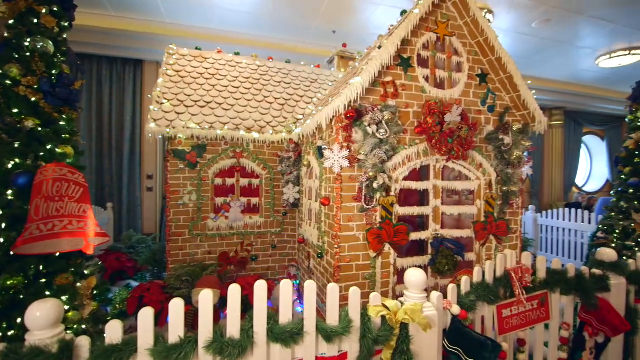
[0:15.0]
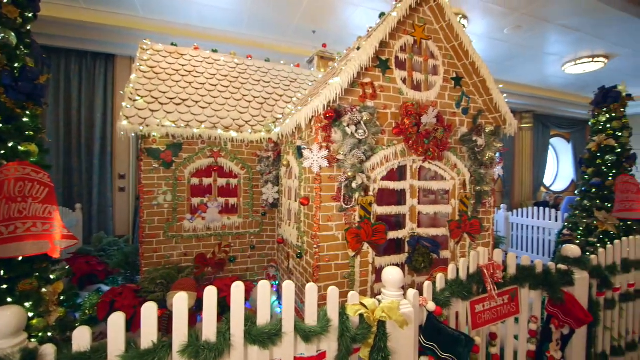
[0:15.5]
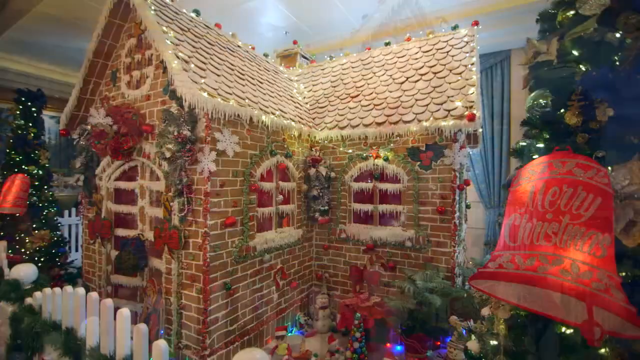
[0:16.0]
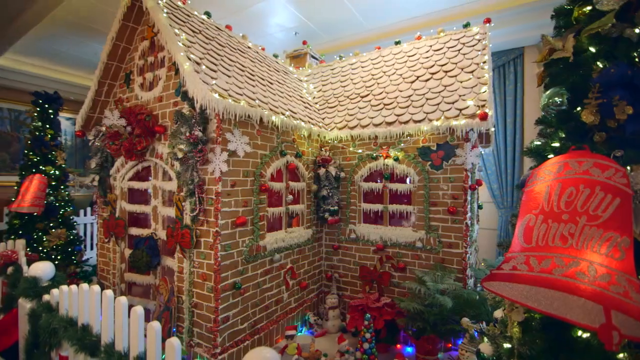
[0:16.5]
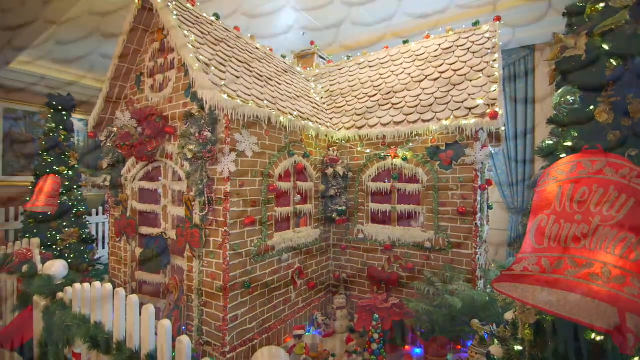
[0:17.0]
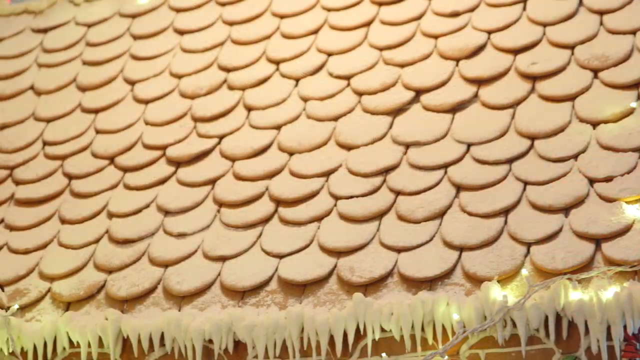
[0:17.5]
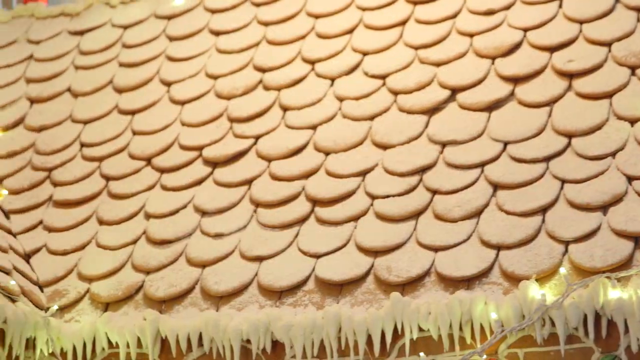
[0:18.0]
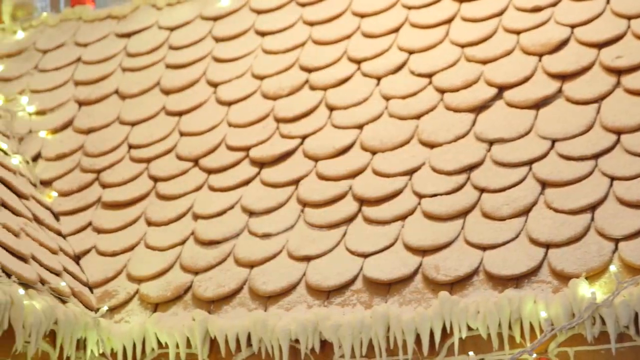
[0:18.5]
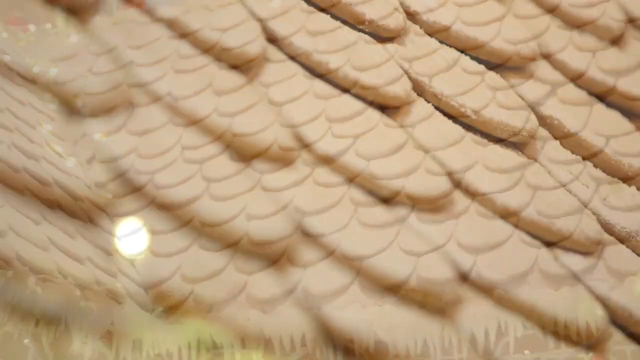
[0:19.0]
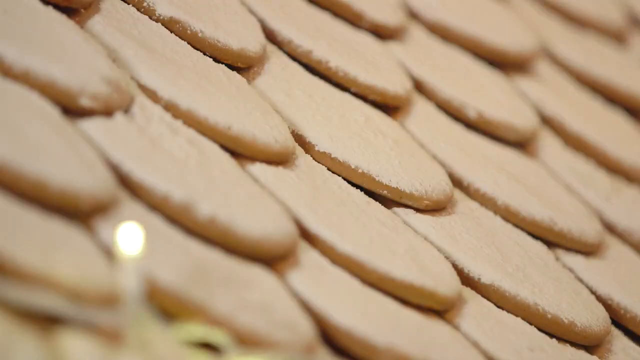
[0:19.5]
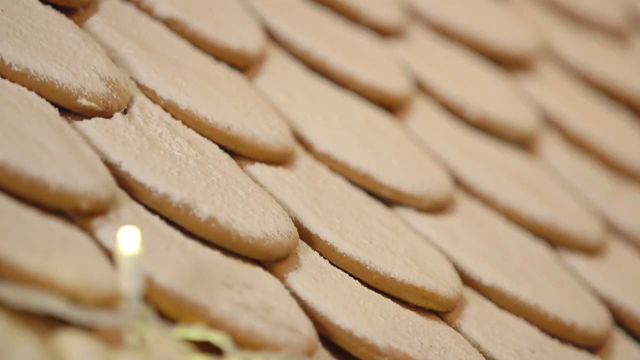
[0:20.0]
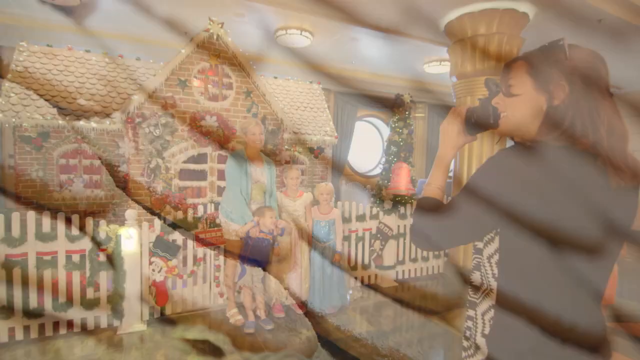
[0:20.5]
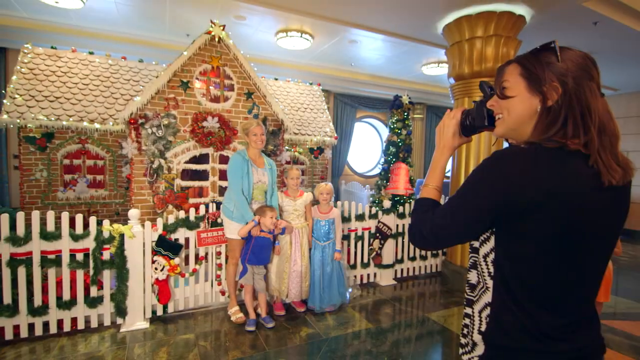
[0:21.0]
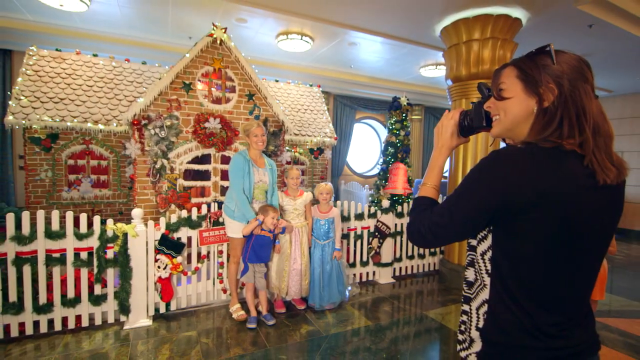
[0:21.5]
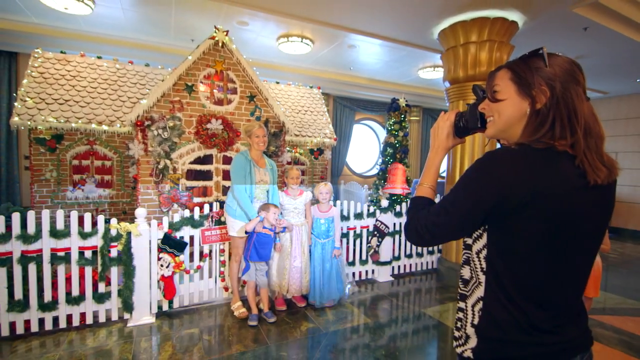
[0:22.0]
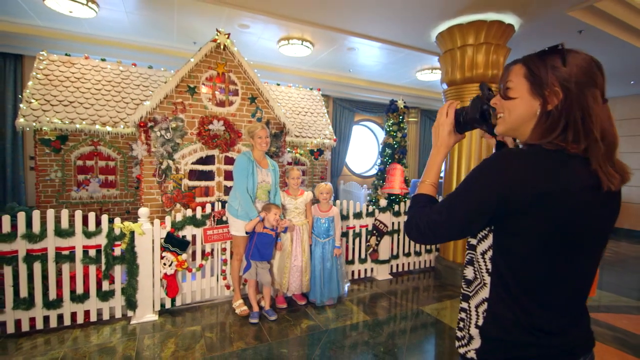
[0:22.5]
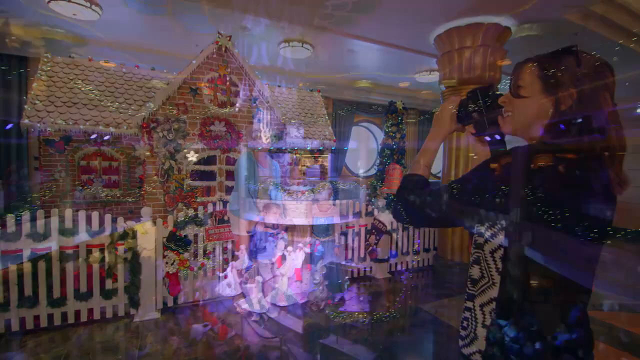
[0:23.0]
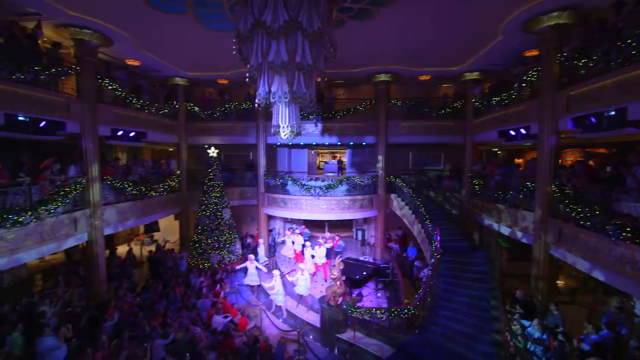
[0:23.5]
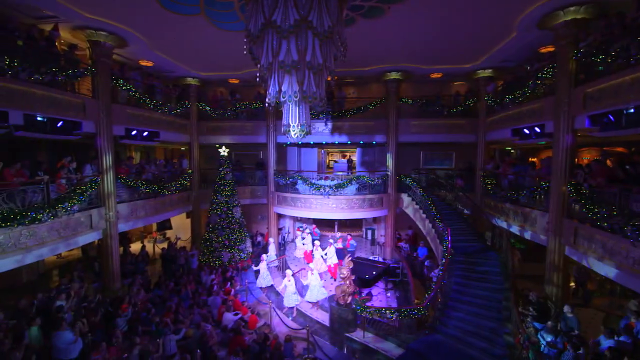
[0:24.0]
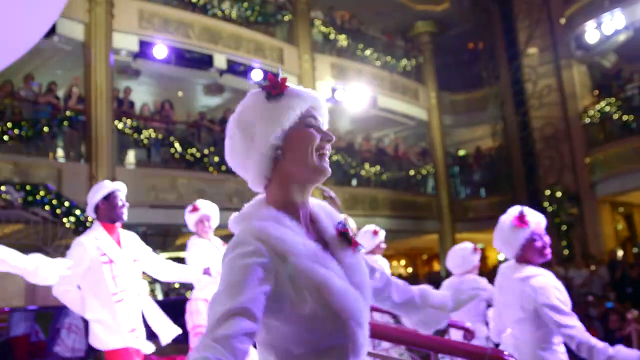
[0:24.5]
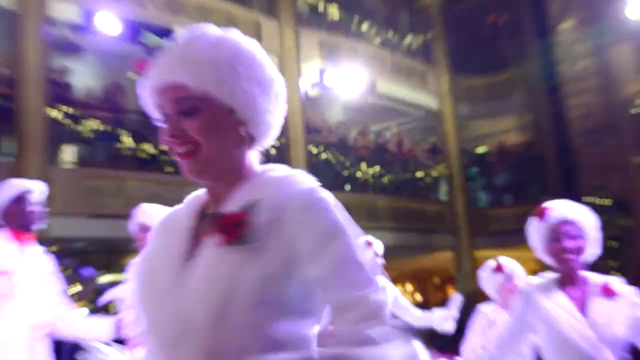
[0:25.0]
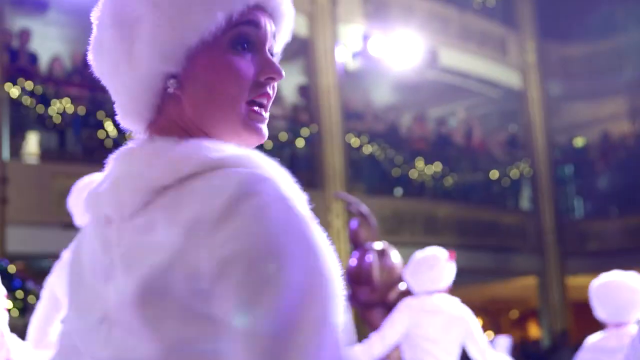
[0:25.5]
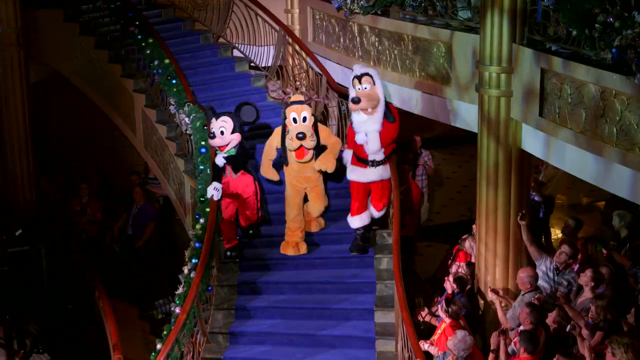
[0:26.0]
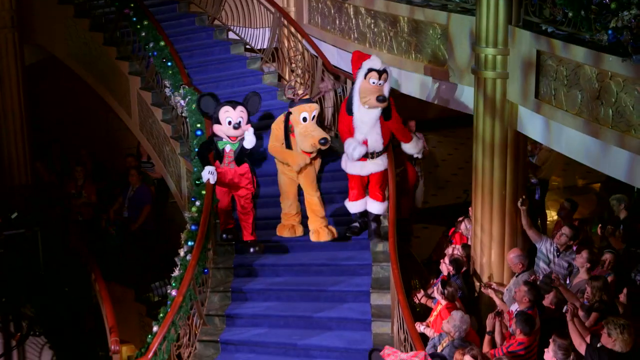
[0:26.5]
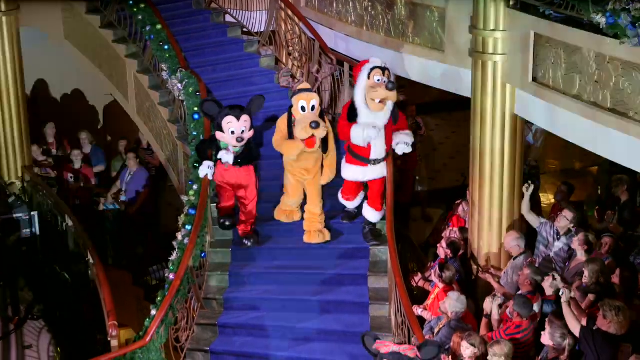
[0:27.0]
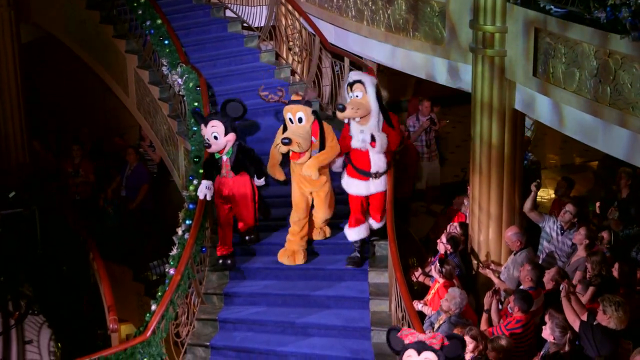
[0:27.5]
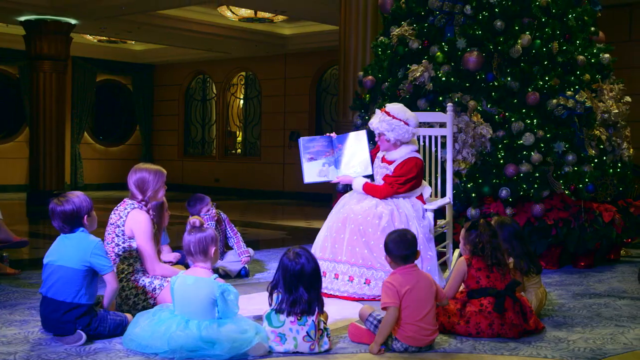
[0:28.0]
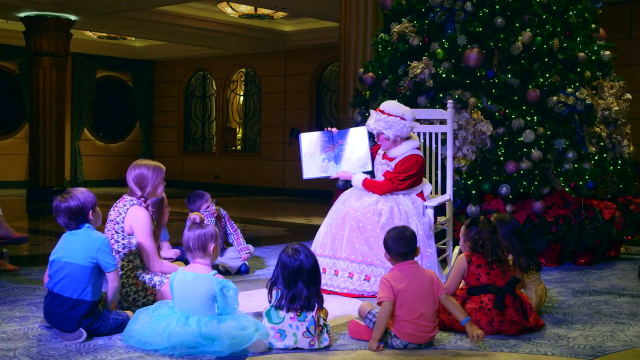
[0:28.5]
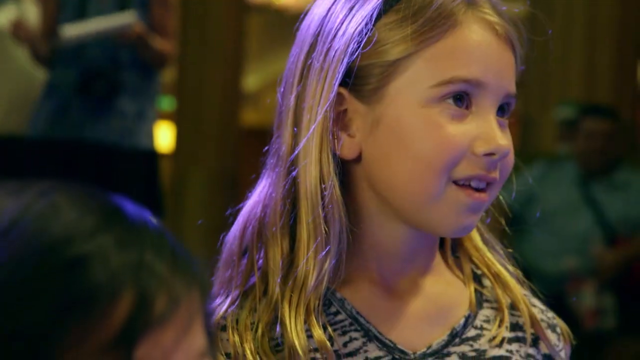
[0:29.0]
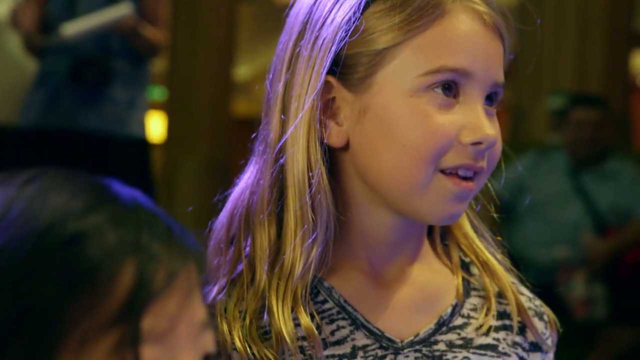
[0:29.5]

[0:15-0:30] The gingerbread house, taller than an average person, is shown in a close-up of its gingerbread shingles, which look individually placed, and then even closer. It appears to be a photo opportunity: a white picket fence decorated with garland is in front of the house, so people cannot touch it but can stand fairly close. A family, a mom with three children (two girls and a boy), stands in front of the gingerbread house posing, while a woman dressed in black and white takes their photo with a big, fancy camera. It is on the boat, with a little portal window beside it. The scene then moves to a show where people dressed in white with white hats are dancing. Mickey, Goofy and Pluto, all dressed in Christmas attire, come down the grand staircase as people watch them. What looks like Mrs. Claus sits on a rocking chair reading to a group of children, whose faces look very inspired.